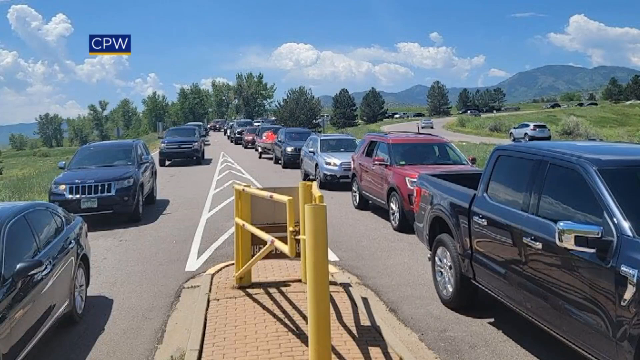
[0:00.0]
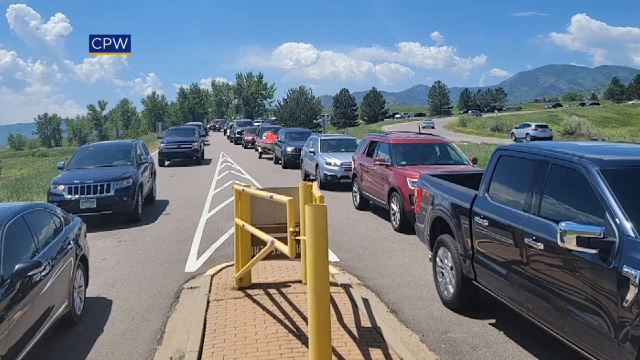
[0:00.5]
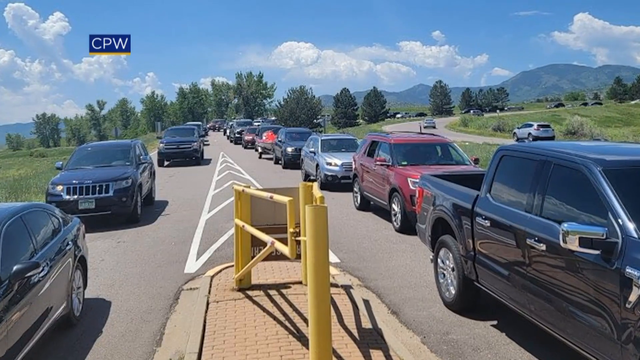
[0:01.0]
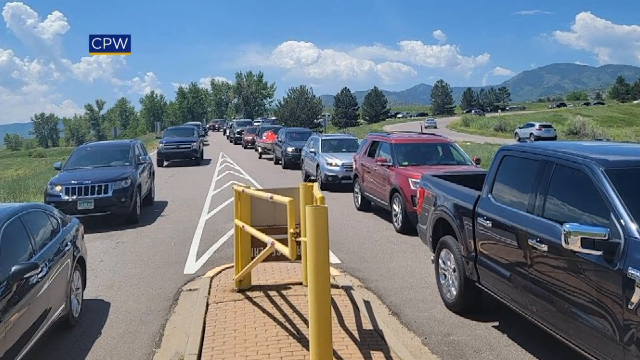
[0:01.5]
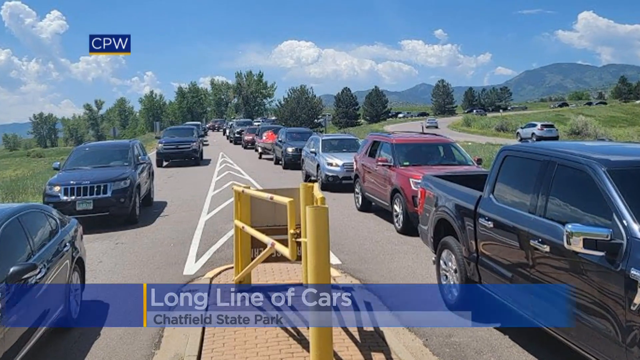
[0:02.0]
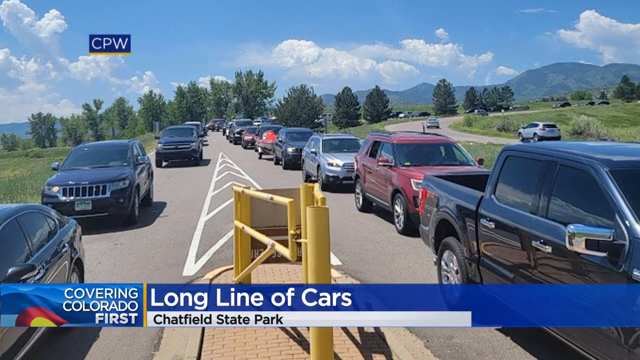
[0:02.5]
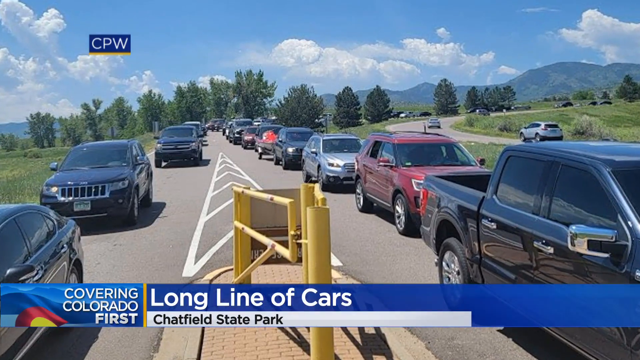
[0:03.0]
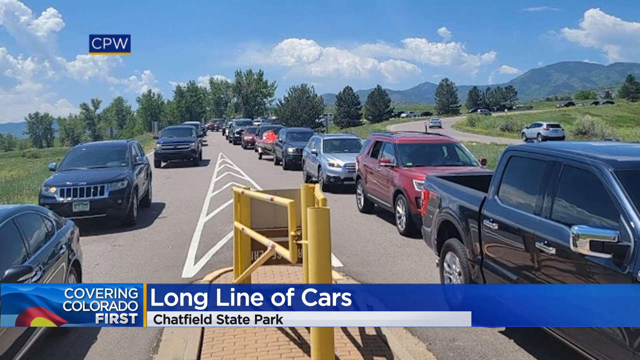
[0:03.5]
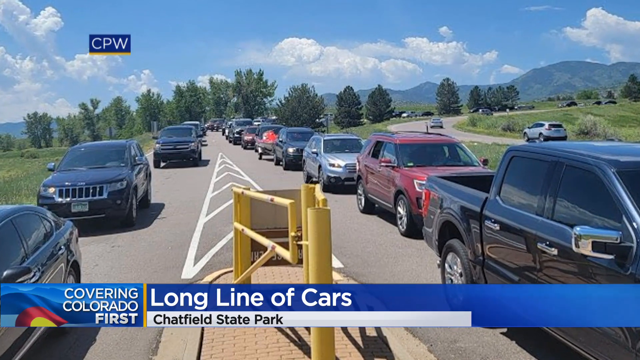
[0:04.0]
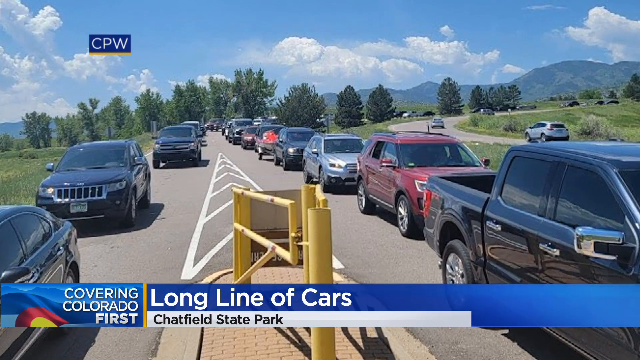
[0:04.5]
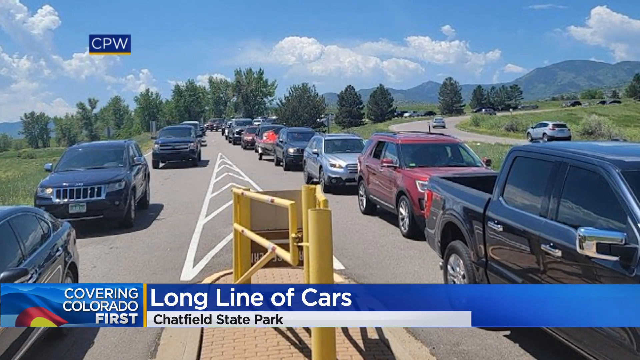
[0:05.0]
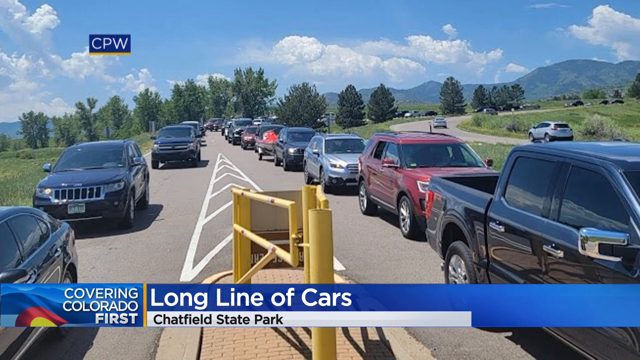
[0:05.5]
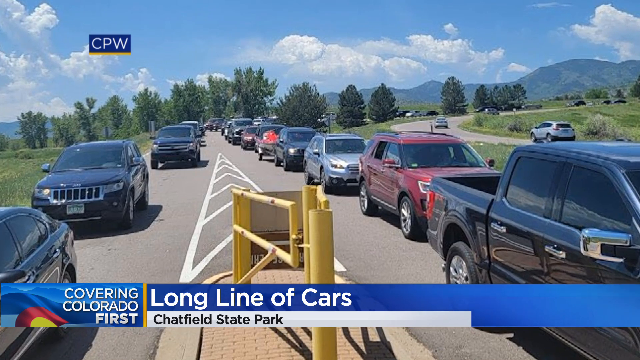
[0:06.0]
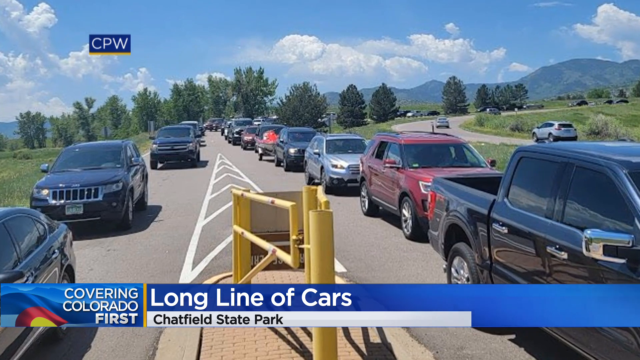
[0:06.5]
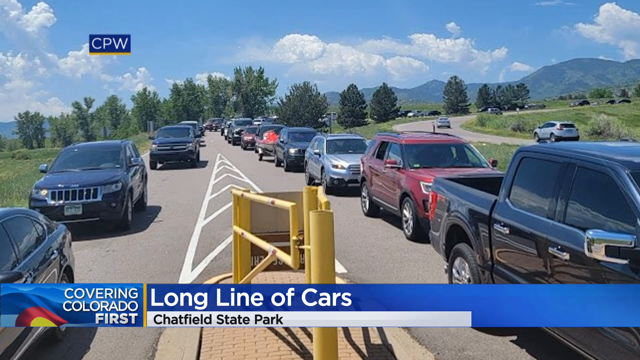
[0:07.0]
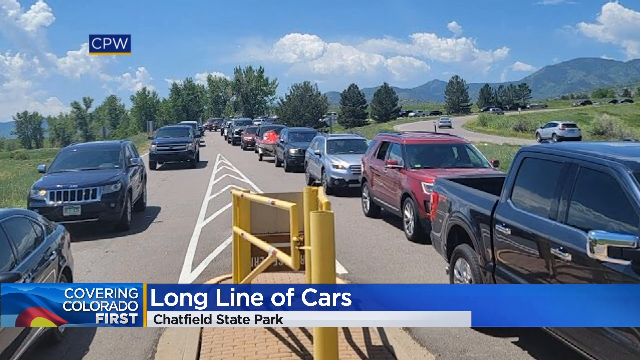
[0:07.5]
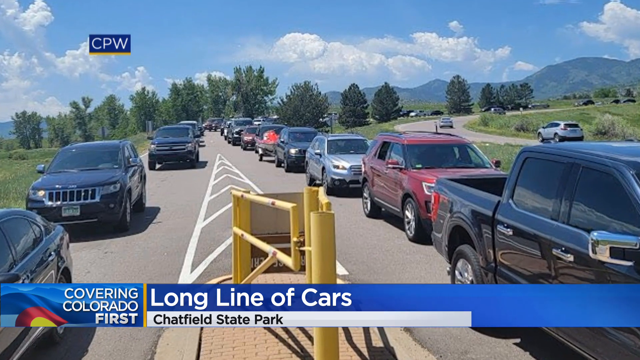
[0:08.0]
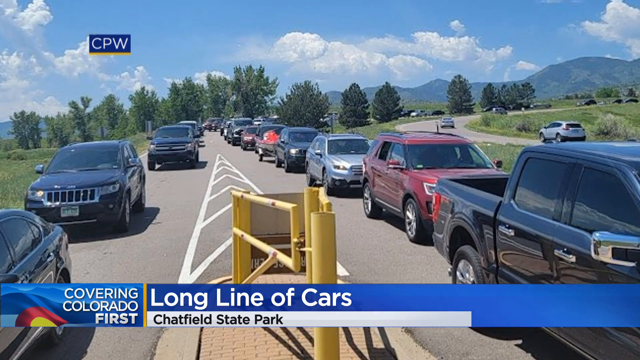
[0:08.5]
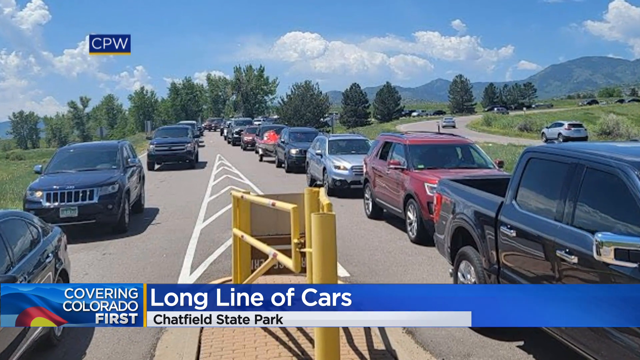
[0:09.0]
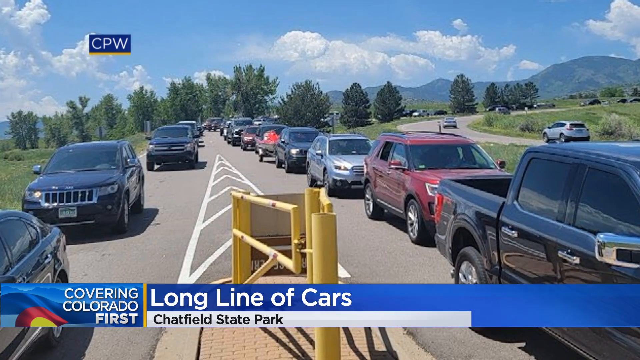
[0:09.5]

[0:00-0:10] Traffic security camera footage shows a long line of cars at a gate. With the way the intro looks and the very blue, flashy header at the bottom of the screen, it almost seems like it may be part of some type of news article. The picture depicts two lines of congested traffic with a mountainous background and a bunch of trees in the back. The people in the cars are probably stuck waiting for something, possibly trapped or blocked.